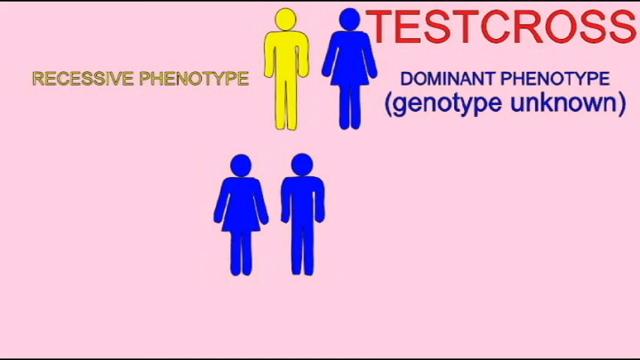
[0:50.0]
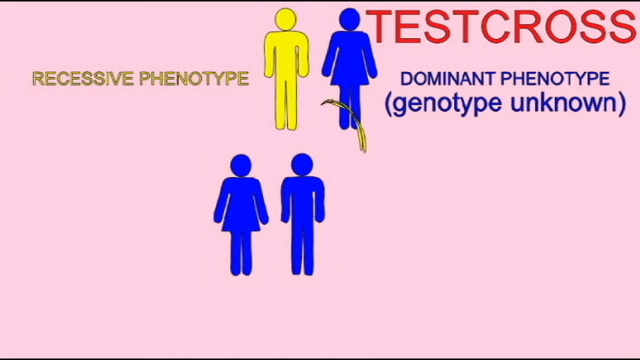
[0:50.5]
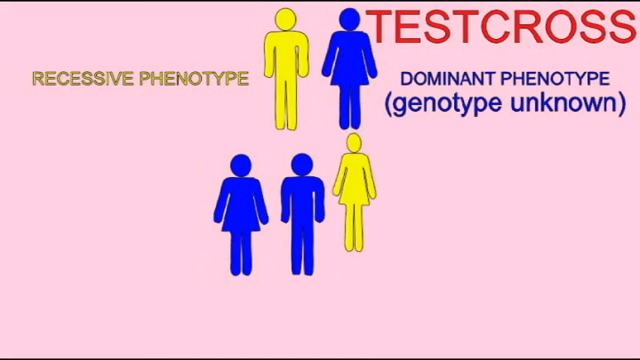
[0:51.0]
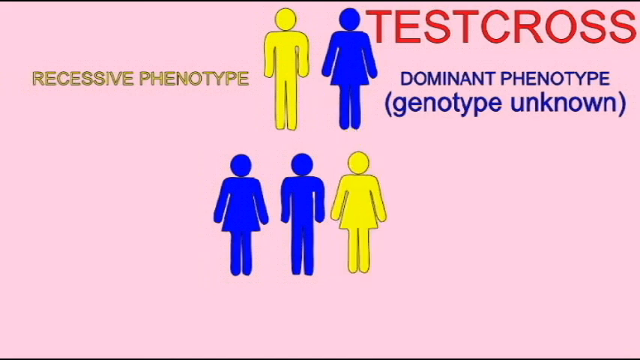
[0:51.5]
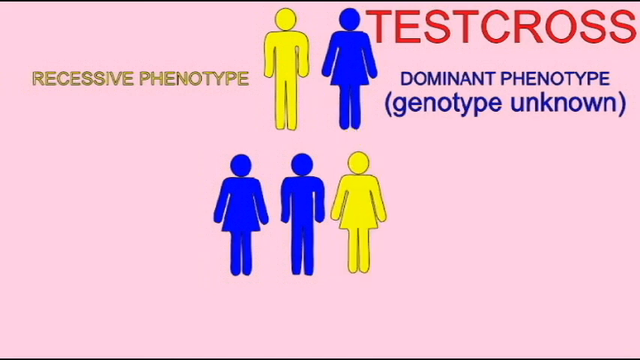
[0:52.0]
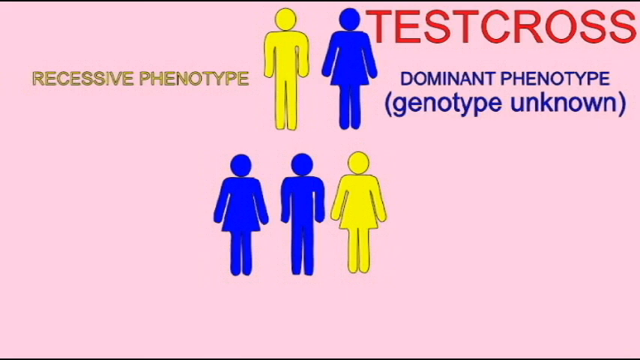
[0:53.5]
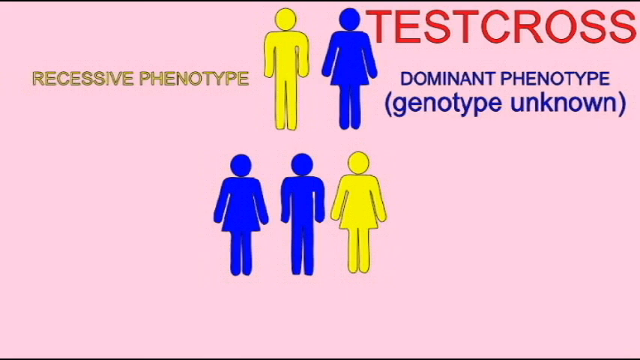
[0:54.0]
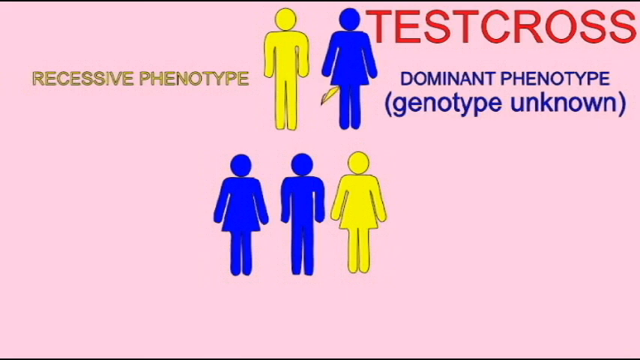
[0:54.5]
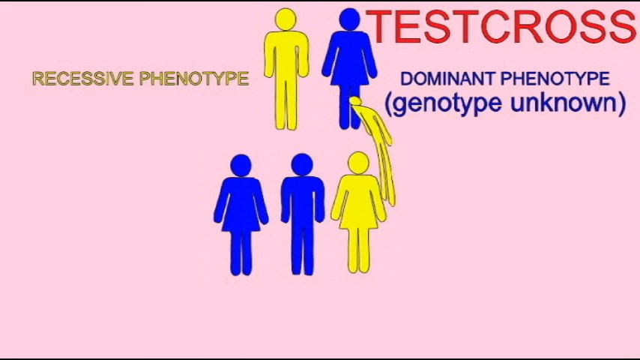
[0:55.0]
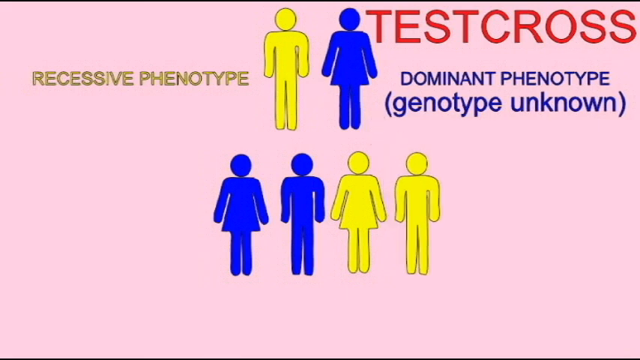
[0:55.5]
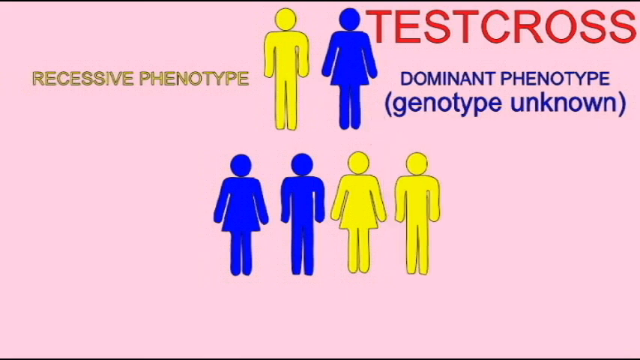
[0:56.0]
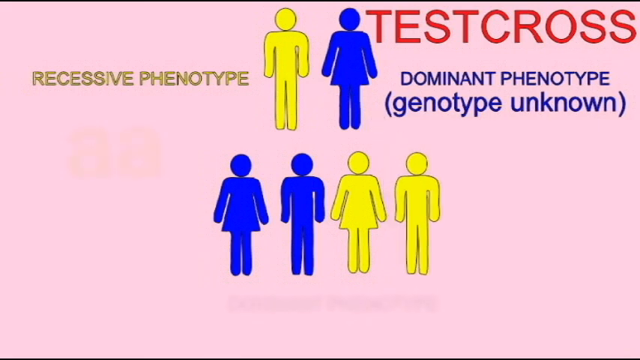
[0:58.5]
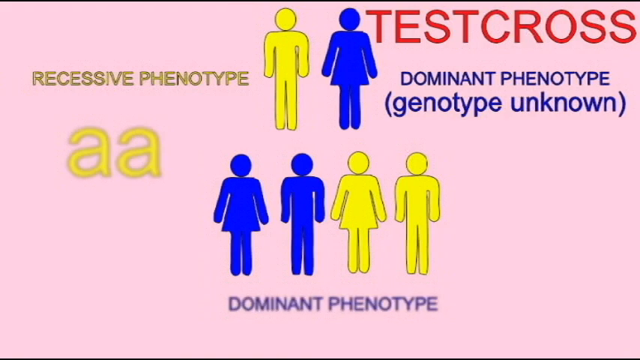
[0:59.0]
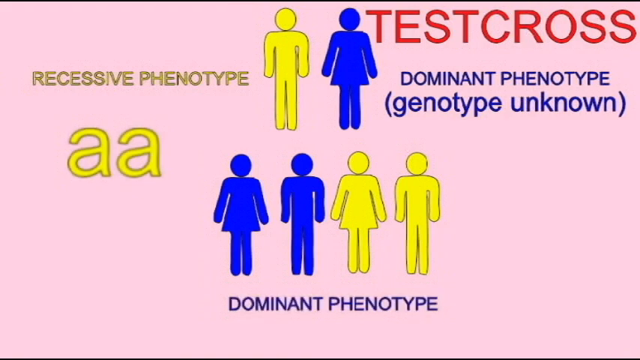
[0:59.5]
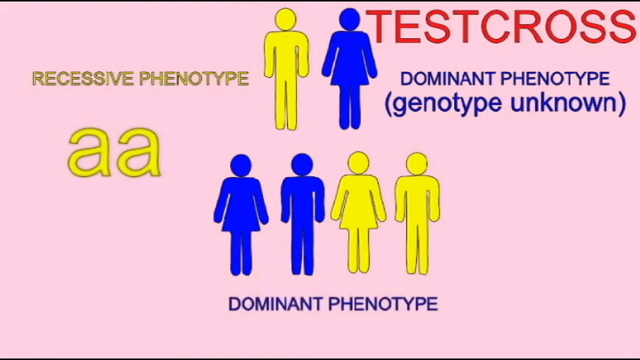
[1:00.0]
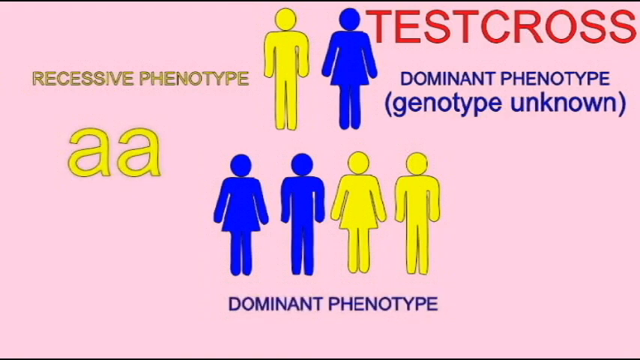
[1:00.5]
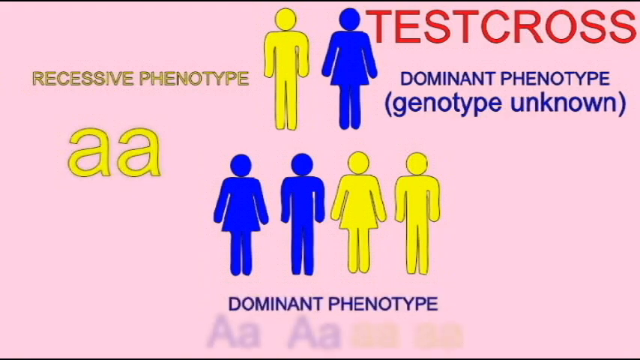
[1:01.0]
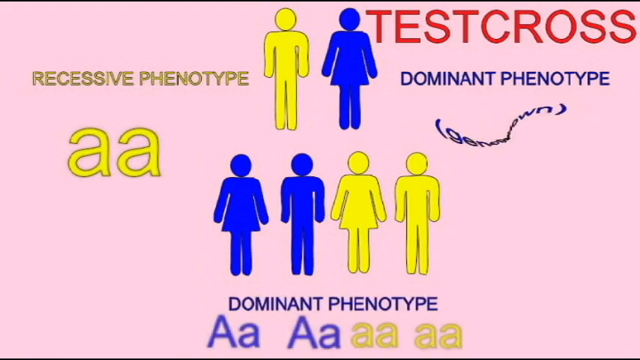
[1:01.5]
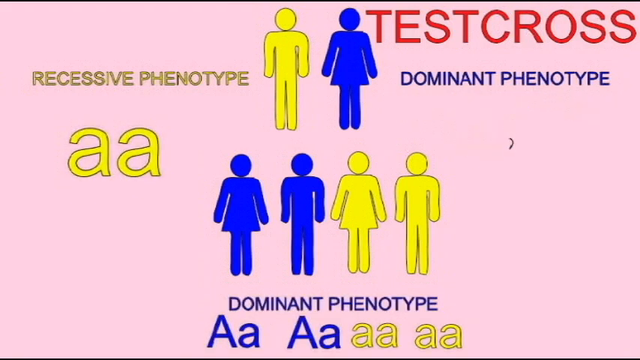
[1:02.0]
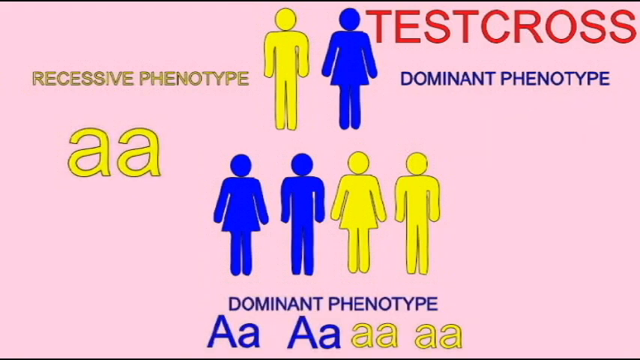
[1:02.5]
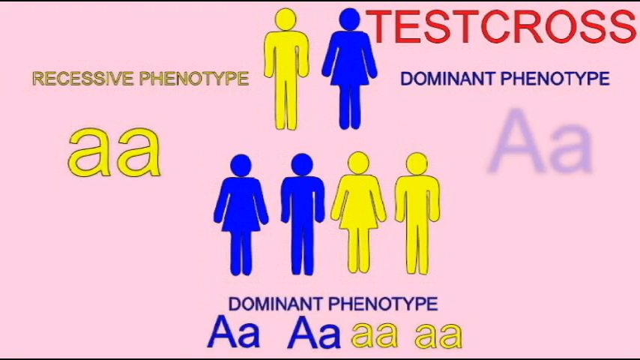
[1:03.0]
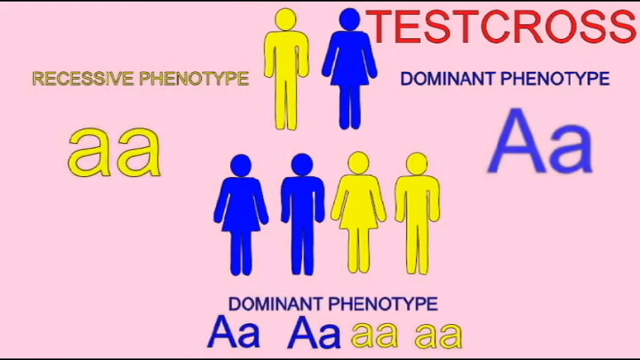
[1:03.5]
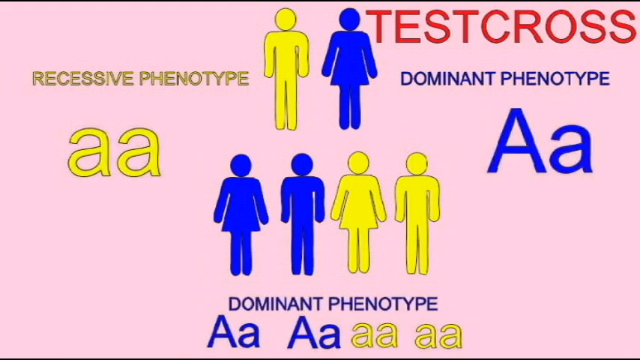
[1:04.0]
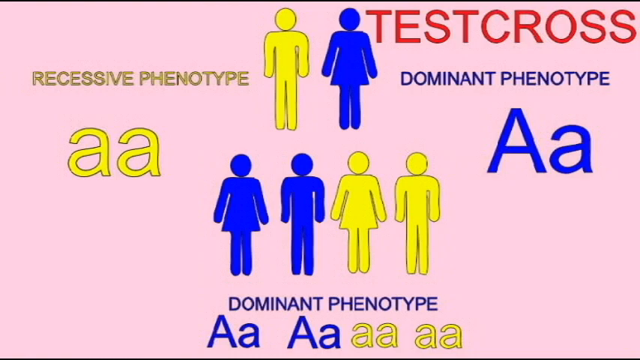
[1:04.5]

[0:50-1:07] At the top are a yellow male and a blue woman; when they go together, they form a woman in blue and a male in blue, and then another female in yellow and another male in yellow. "Dominant phenotype" is written below the images. On the left side is "aa", and on the right side "Aa" is written in blue, against a pink background. "Testcross" is written in the corner, "recessive phenotype" in the right corner, and "dominant phenotype" on the right side. The images keep appearing as they come, showing how the genotype changes, and there are letters at the bottom of the screen.